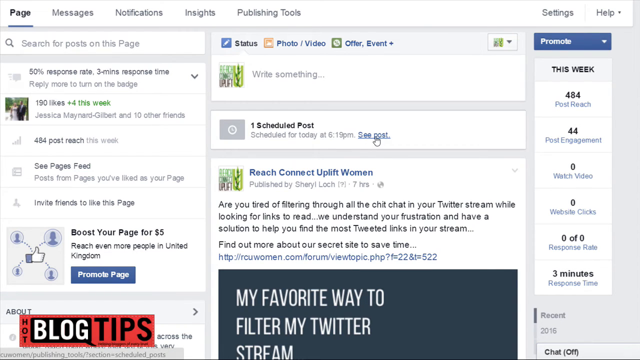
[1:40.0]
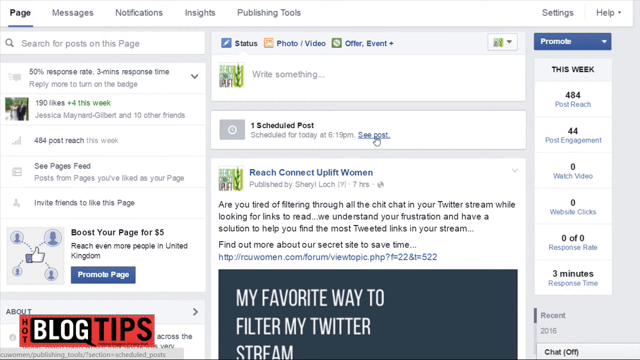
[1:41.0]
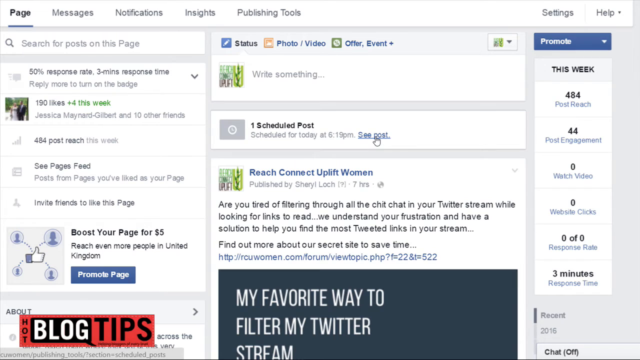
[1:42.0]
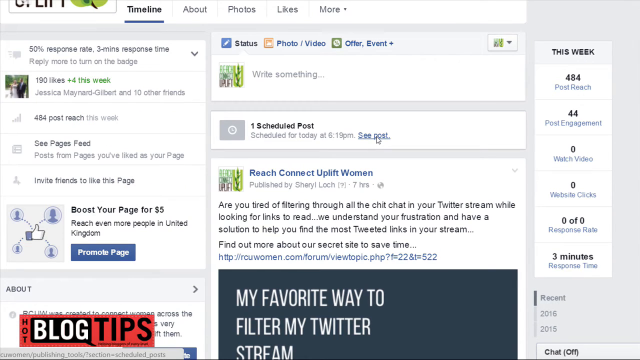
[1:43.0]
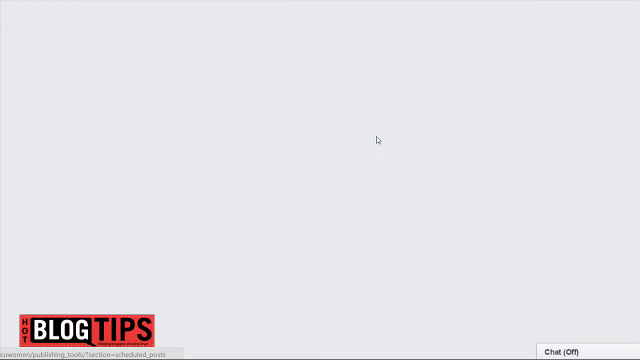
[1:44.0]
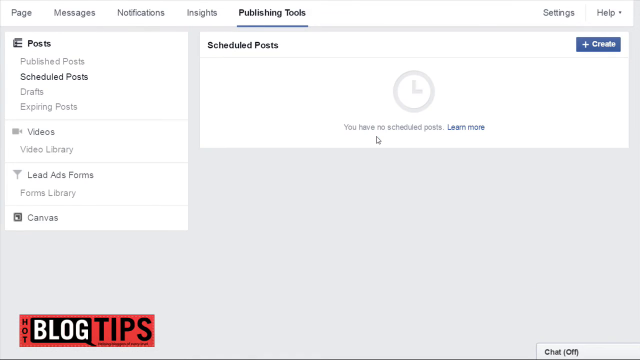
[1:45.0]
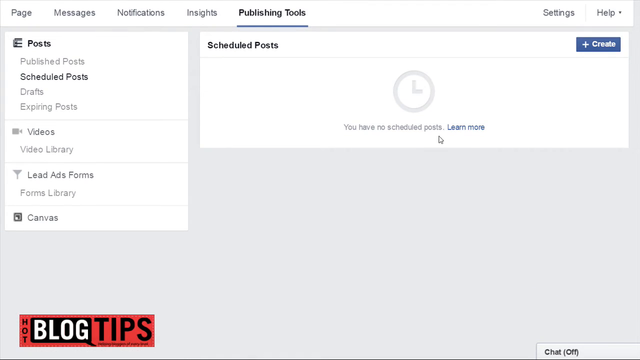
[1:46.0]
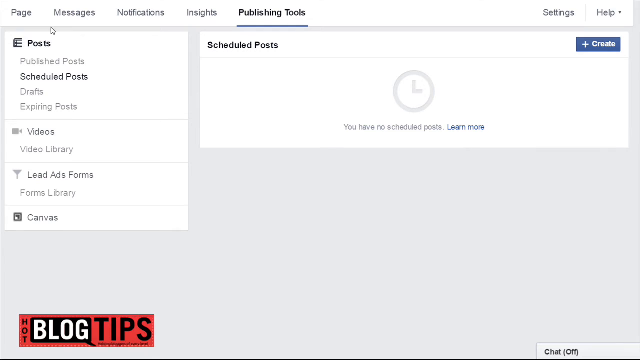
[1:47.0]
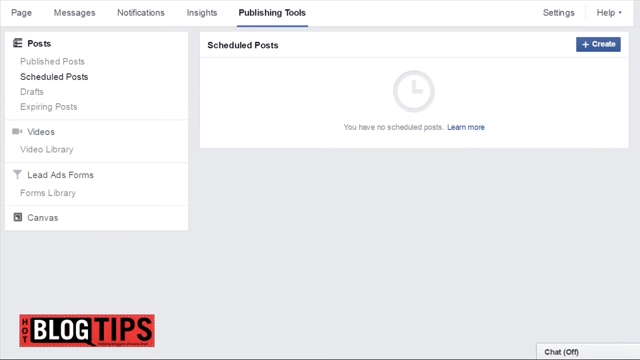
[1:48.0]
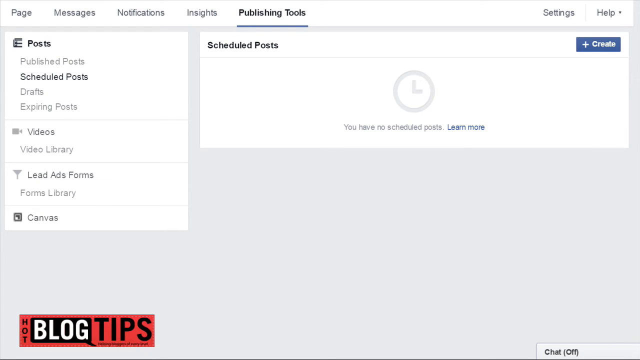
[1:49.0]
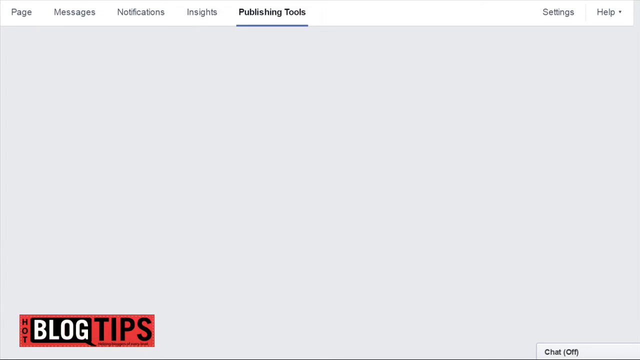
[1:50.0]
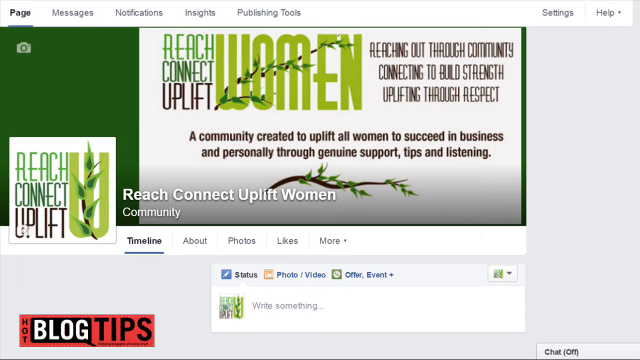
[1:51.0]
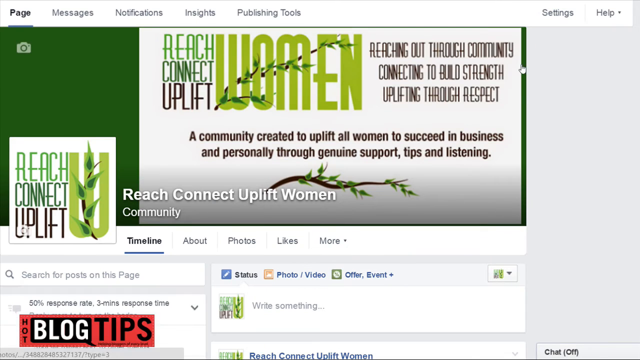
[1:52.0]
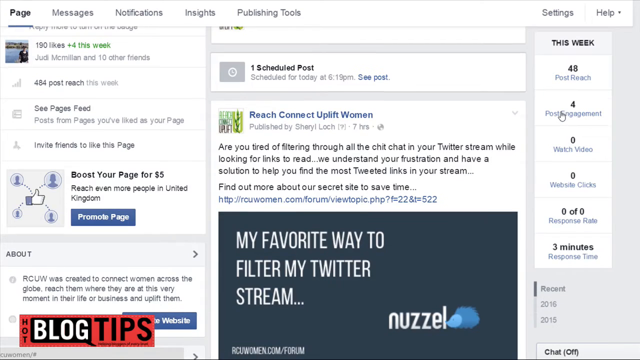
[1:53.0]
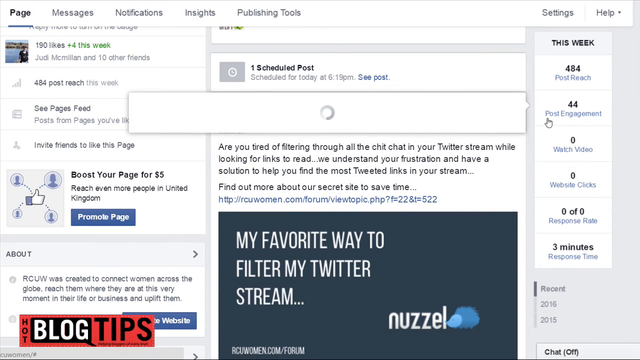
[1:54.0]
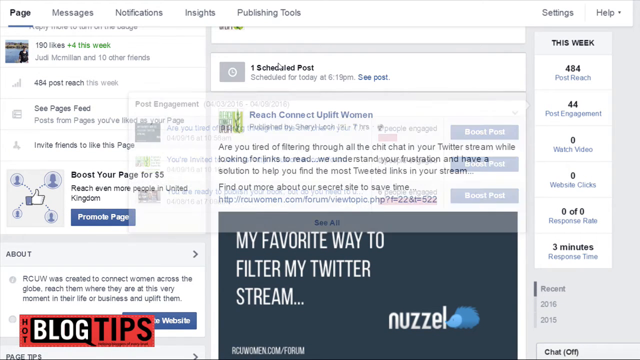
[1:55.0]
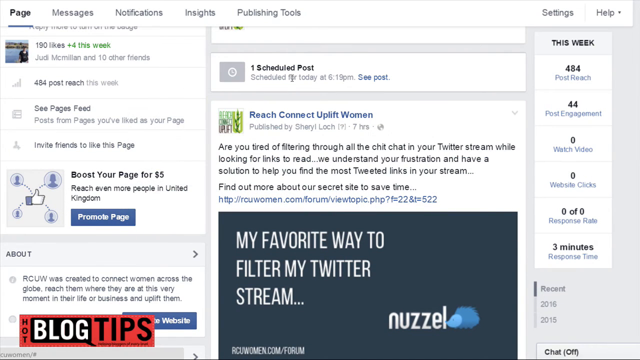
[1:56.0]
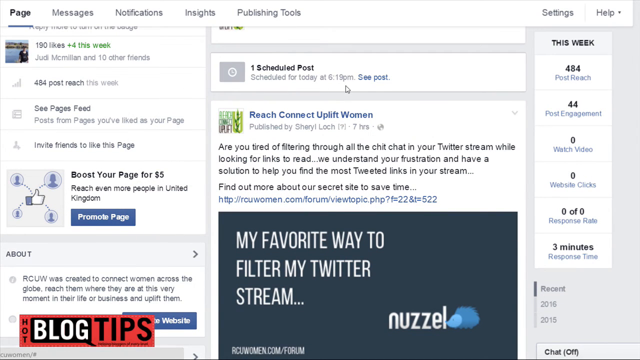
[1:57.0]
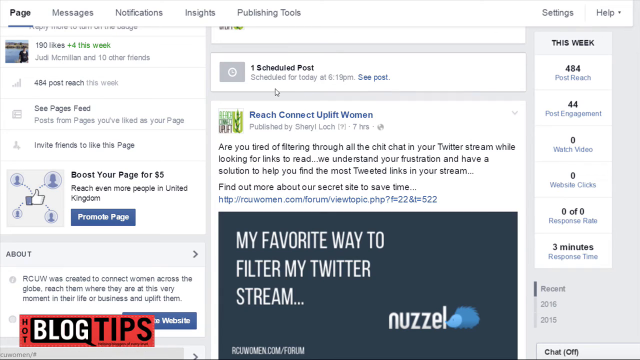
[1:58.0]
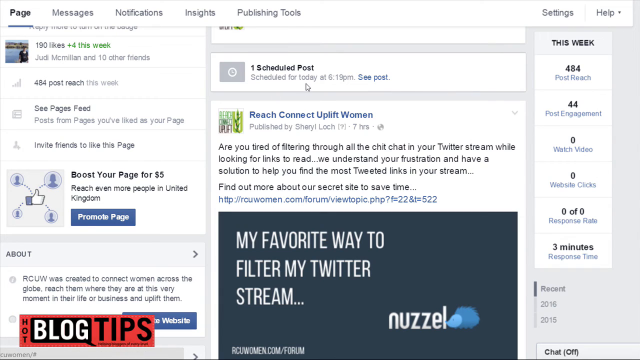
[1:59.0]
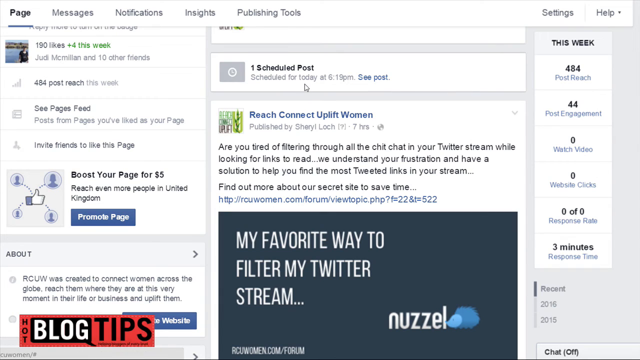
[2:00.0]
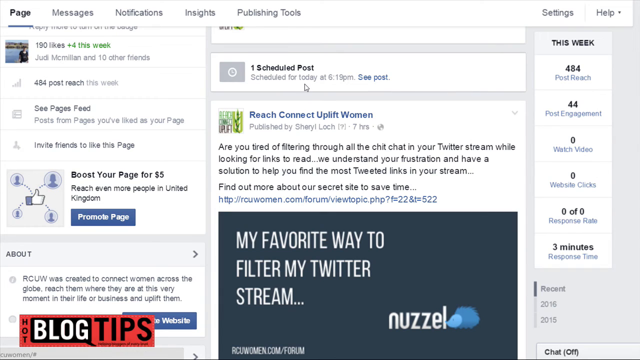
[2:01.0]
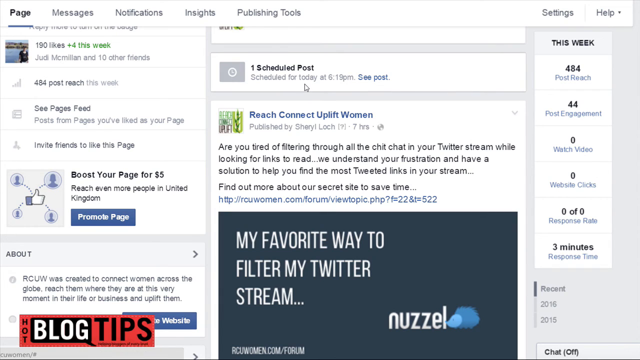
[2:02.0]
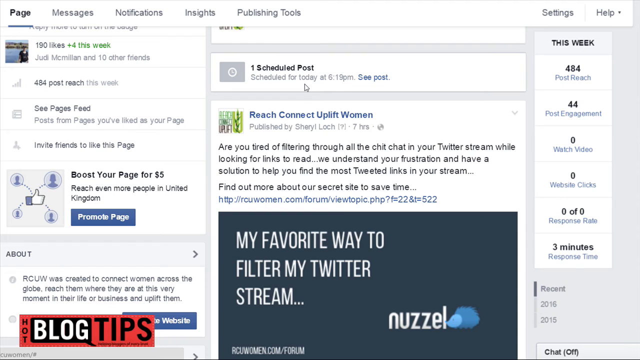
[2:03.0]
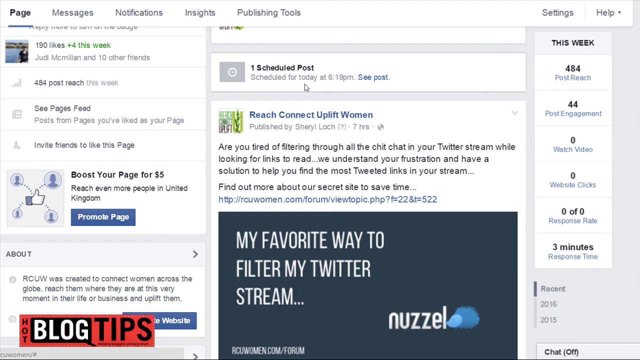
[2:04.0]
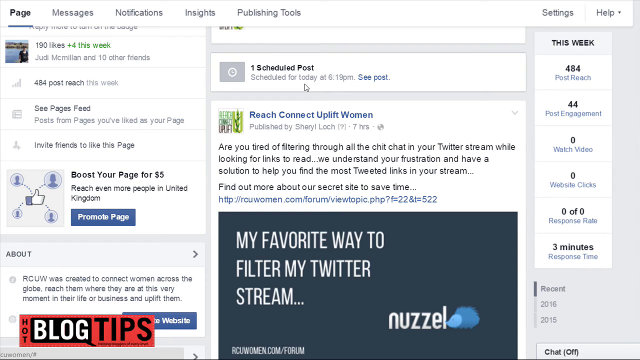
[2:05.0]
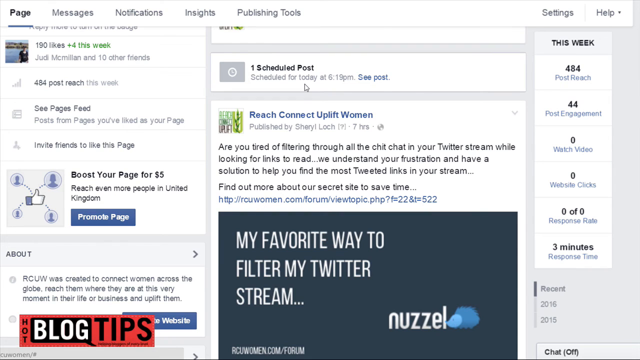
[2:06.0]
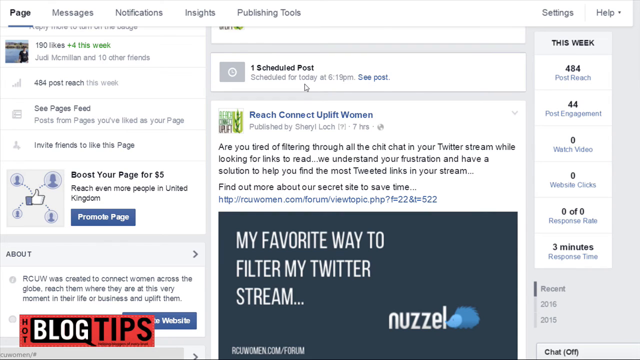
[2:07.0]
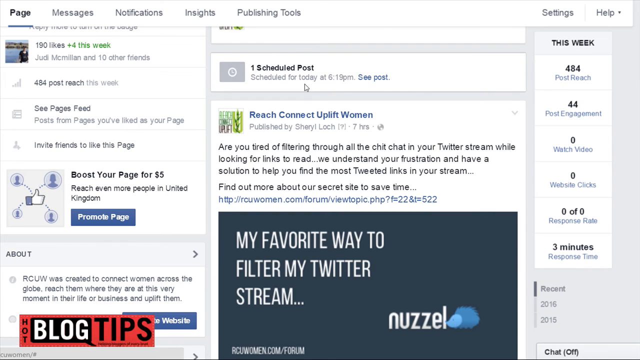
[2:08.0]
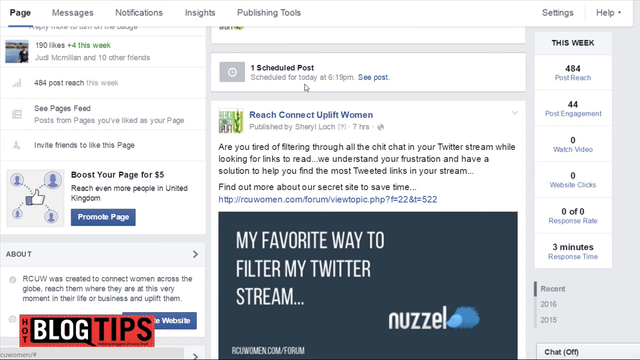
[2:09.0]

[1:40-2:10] The user hovers over a highlighted "see post" link, which becomes underlined and is clicked. It leads to a page that says "scheduled posts", with "you have no scheduled posts" underneath and "learn more" highlighted in blue. On the left-hand side is some information such as page, message, notification, and site publishing tools at the top. The user clicks on what seems to be the front of the website, the page about women with green and earth tones seen earlier, then quickly clicks back to the scheduled post on the social media feed, apparently Facebook. It still shows one scheduled post, "scheduled for today at 6:19", and "see post". The user seems satisfied and does not move anywhere else.